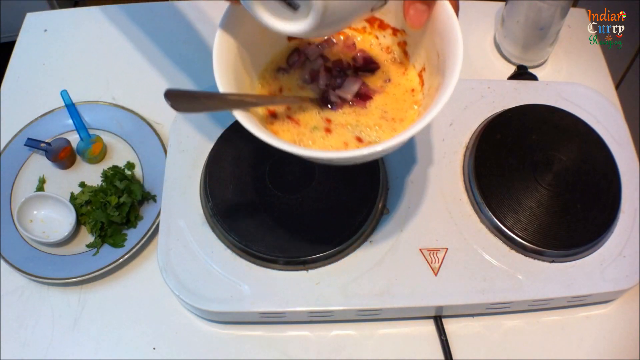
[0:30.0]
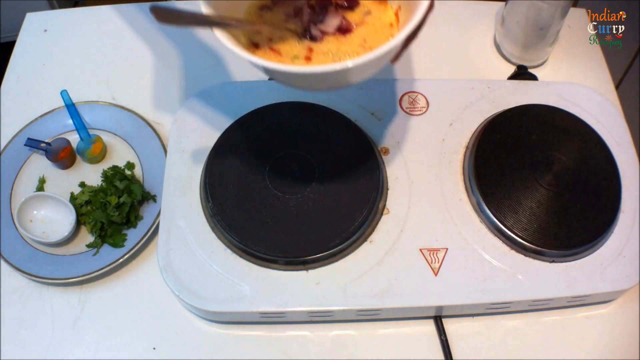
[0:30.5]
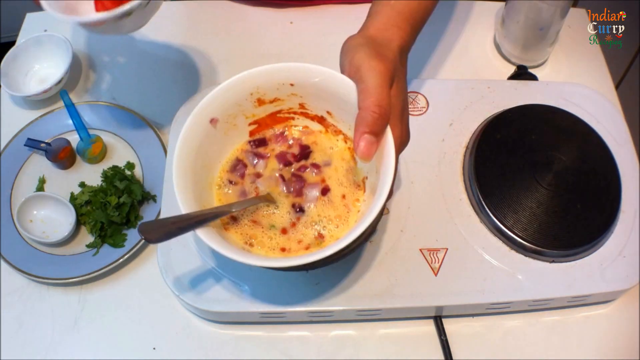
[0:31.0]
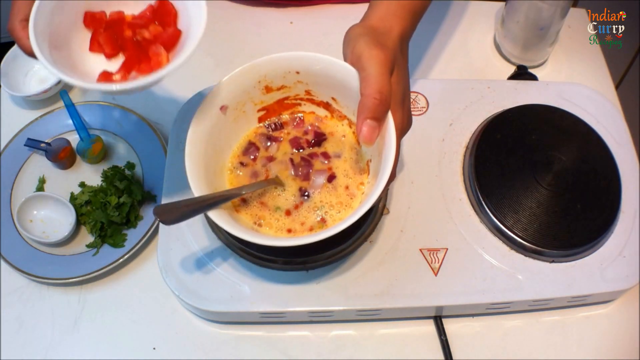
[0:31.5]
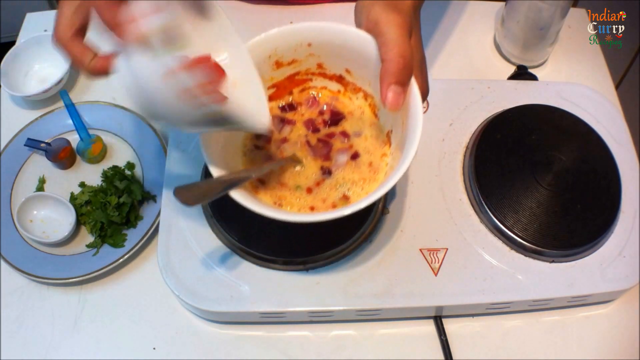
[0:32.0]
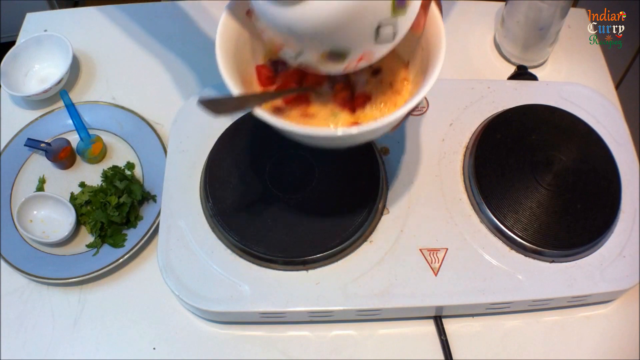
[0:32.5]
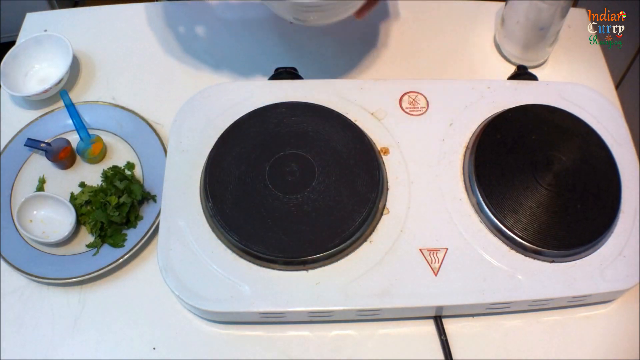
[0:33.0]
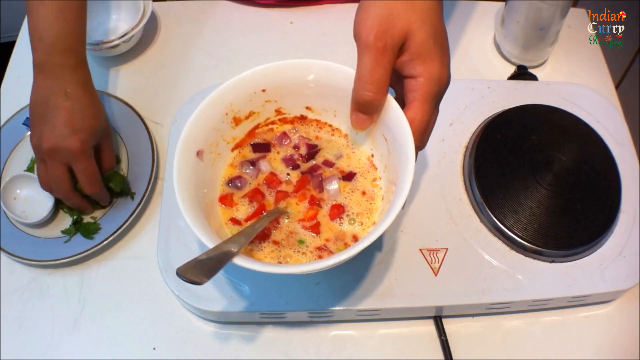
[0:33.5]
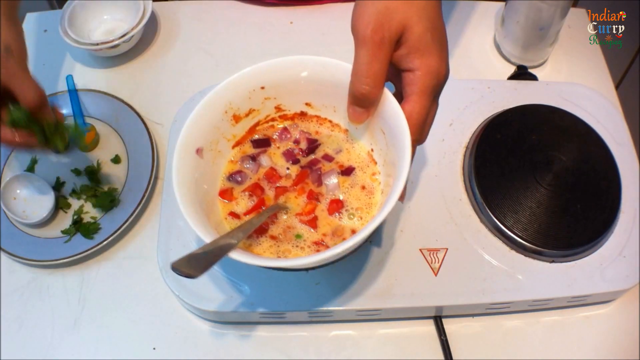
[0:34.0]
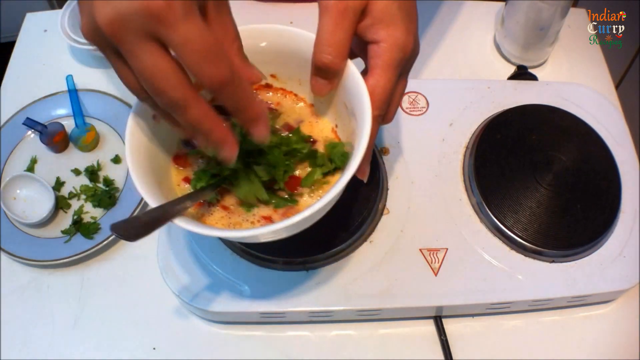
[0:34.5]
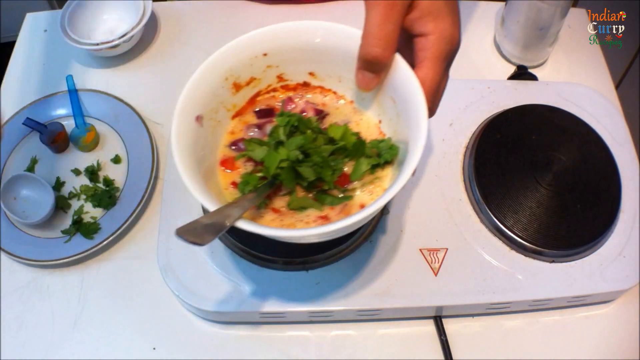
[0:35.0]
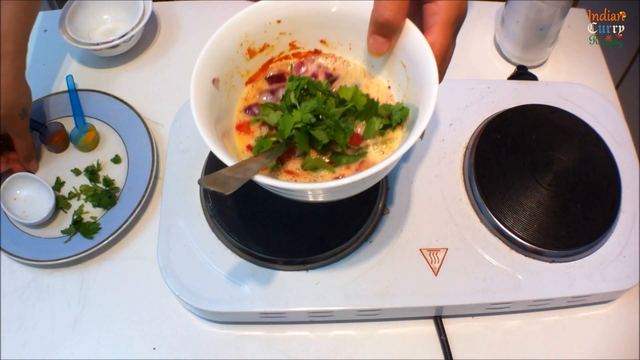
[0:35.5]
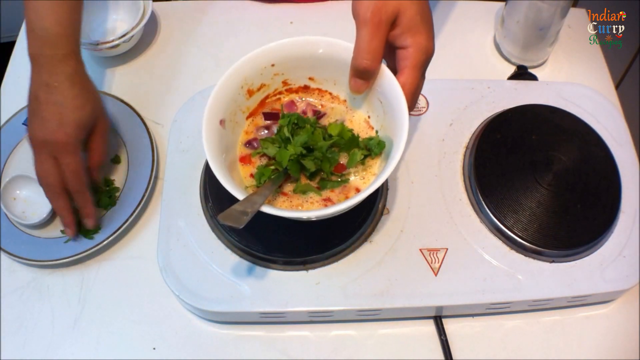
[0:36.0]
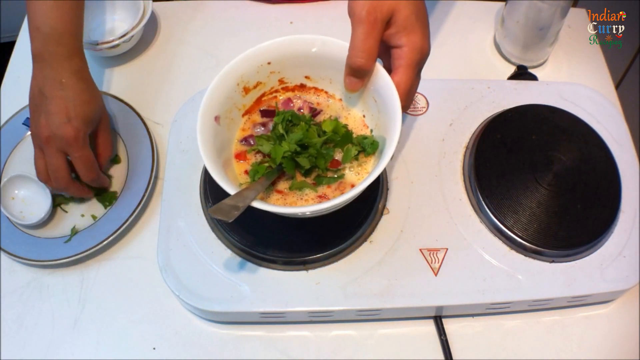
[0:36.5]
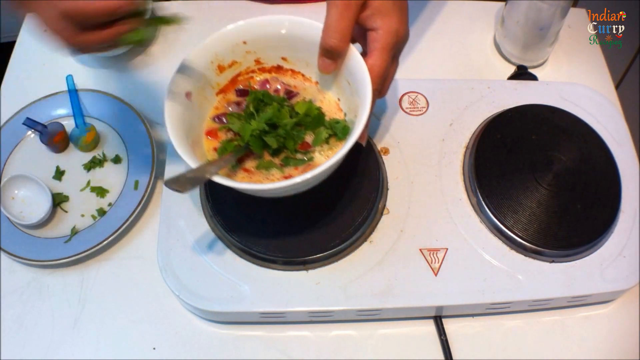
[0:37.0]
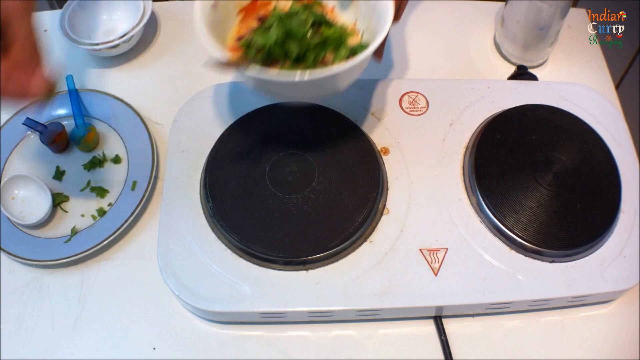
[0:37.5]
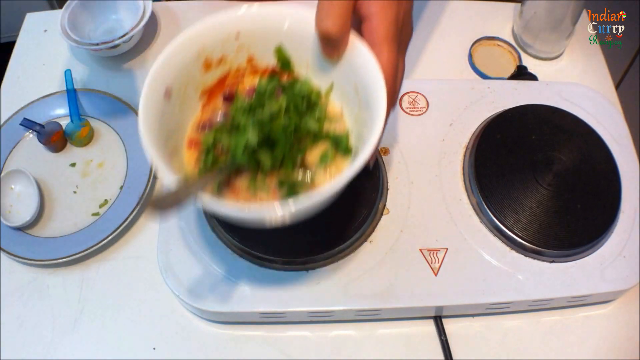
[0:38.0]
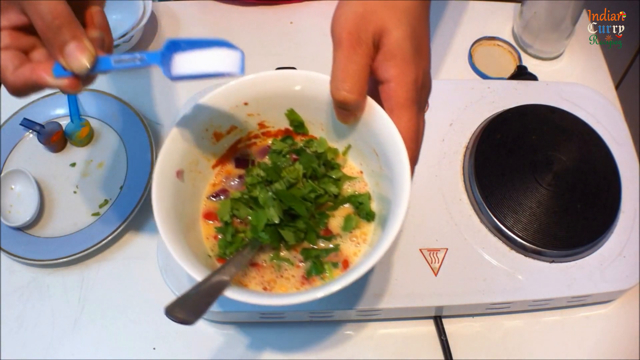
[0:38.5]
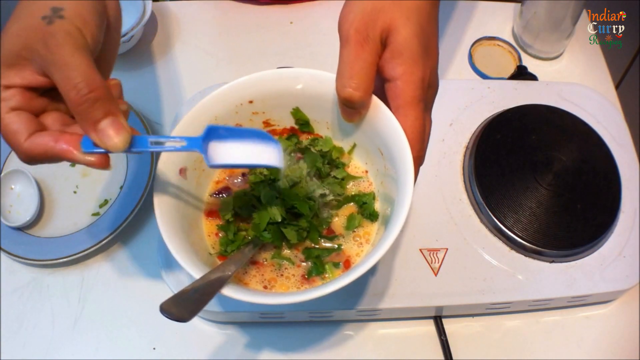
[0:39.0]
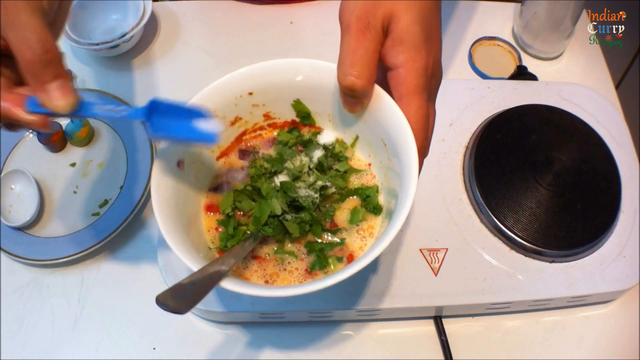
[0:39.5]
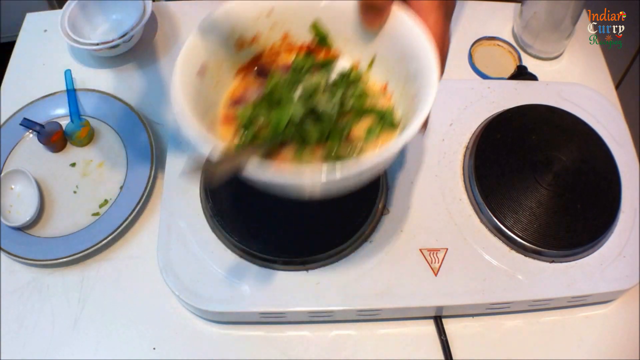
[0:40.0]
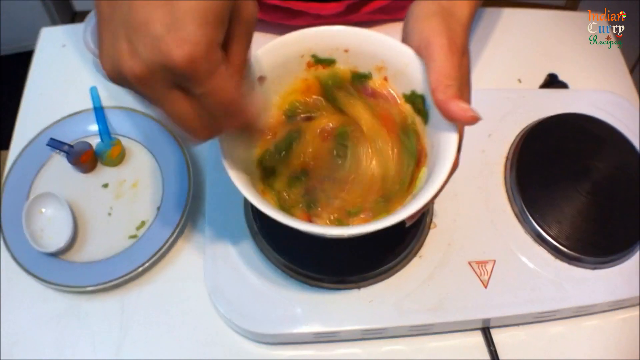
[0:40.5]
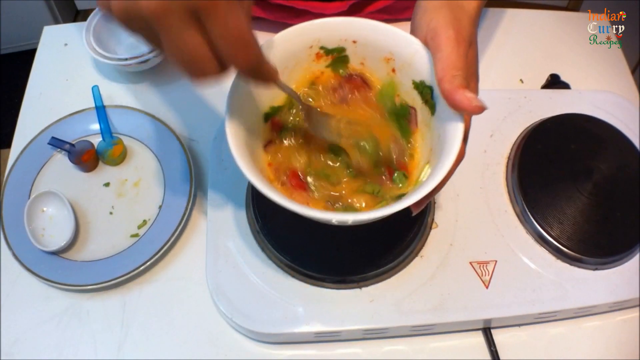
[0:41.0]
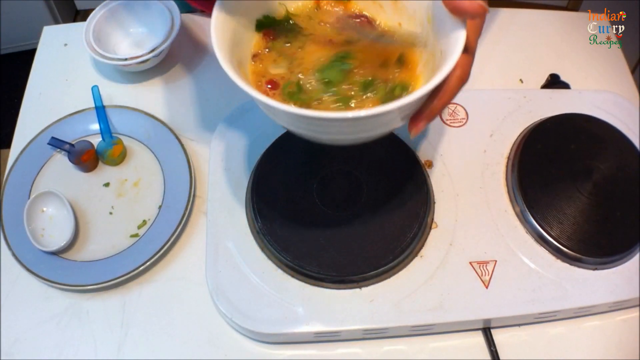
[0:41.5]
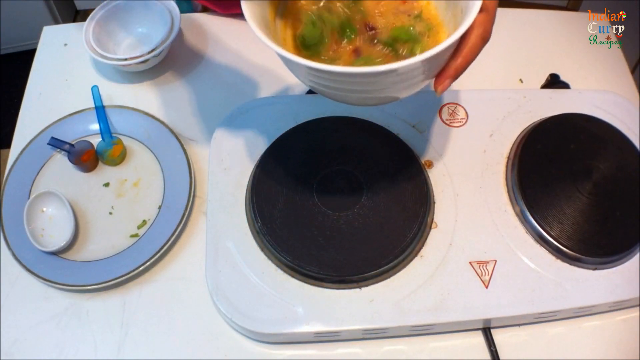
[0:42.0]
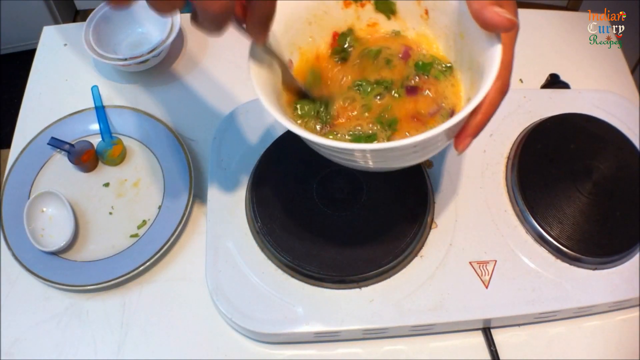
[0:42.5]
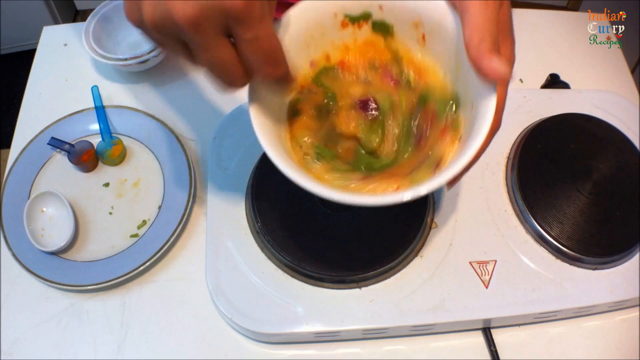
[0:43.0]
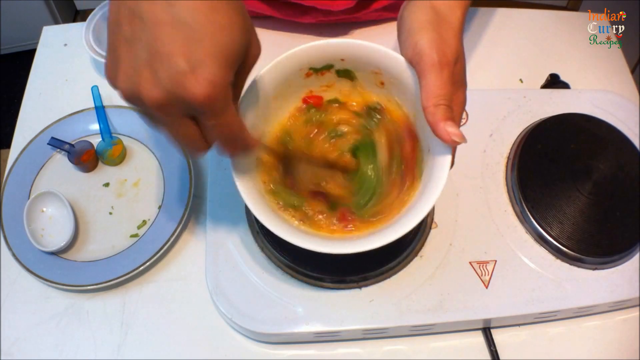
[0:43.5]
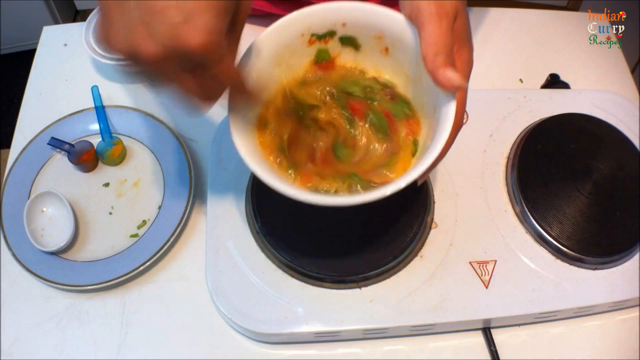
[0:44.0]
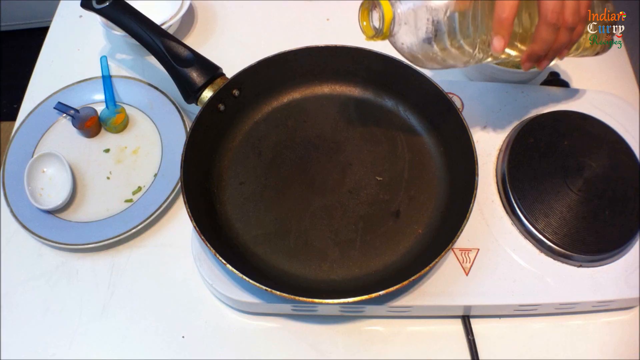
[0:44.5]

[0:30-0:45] A pair of hands holds a white bowl that already contains egg yolk and other ingredients. They pour some tomato into the bowl, add some basil, then pour what looks to be possibly flour or sugar on top and stir rapidly. The scene skips to them pouring some sort of oil into the bowl of mixed ingredients. The bowl is held by two brown hands over a portable stovetop. A plate with lots of ingredients is on the left side of the screen, and there are some empty bowls in the back. In the final scene, a frying pan is on one of the stovetop portions, and they look about to pour the contents of the bowl into the frying pan to start cooking. A black wire is attached to the back of the portable stove, and everything is on a white table. The plate on the table is blue on the outside and white on the inside.